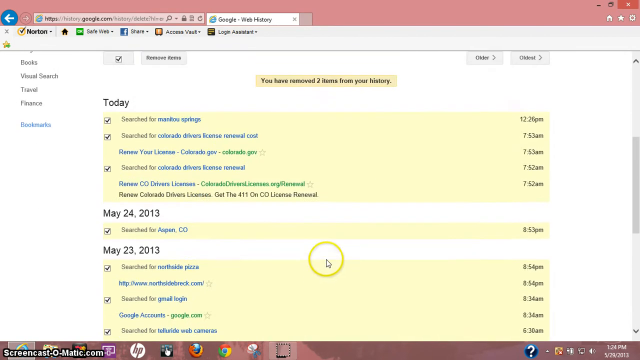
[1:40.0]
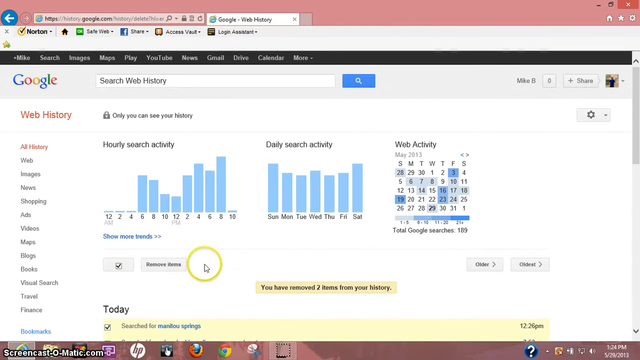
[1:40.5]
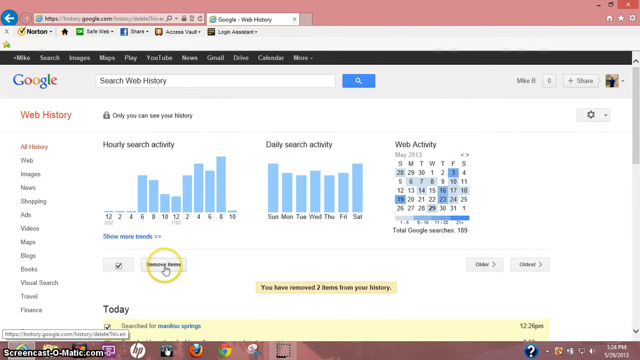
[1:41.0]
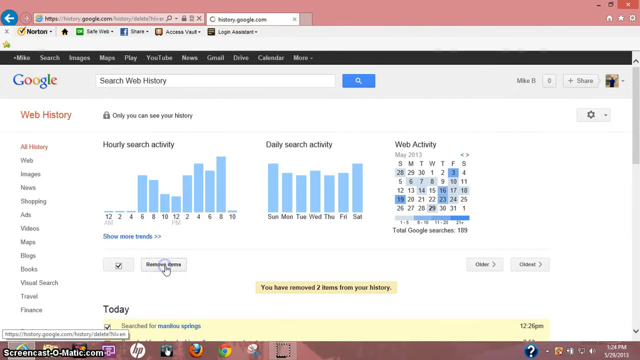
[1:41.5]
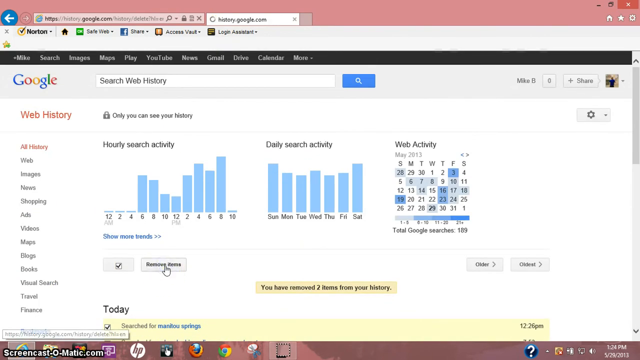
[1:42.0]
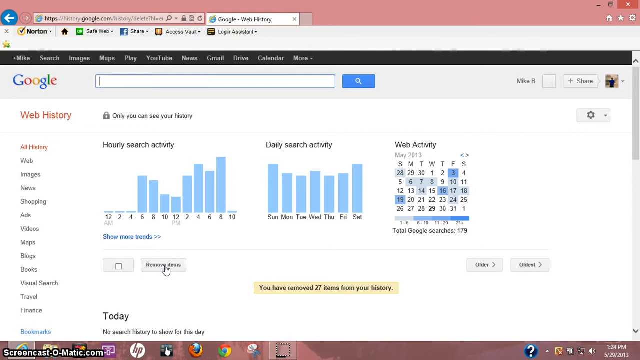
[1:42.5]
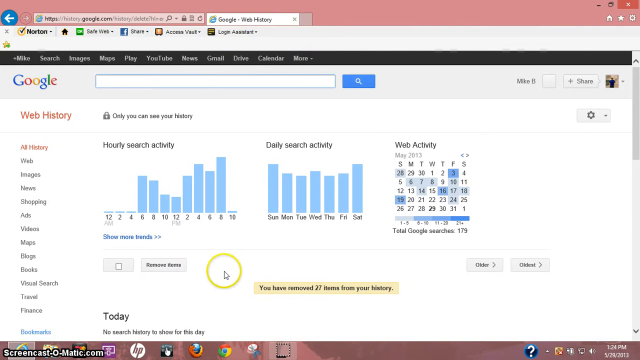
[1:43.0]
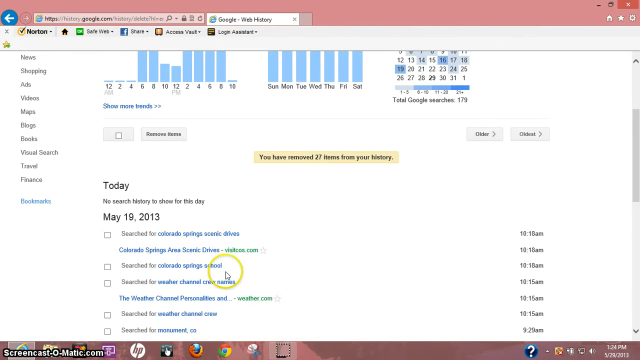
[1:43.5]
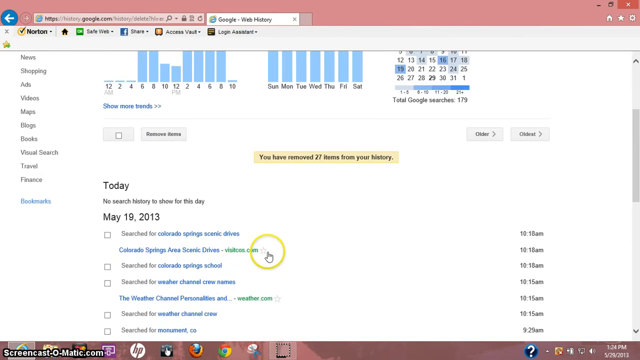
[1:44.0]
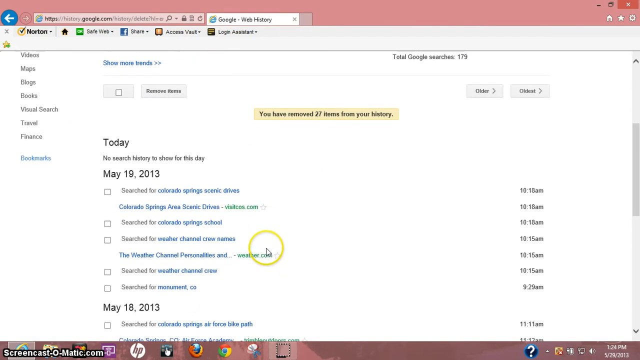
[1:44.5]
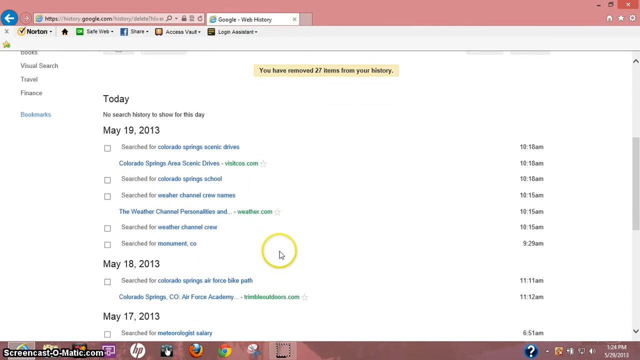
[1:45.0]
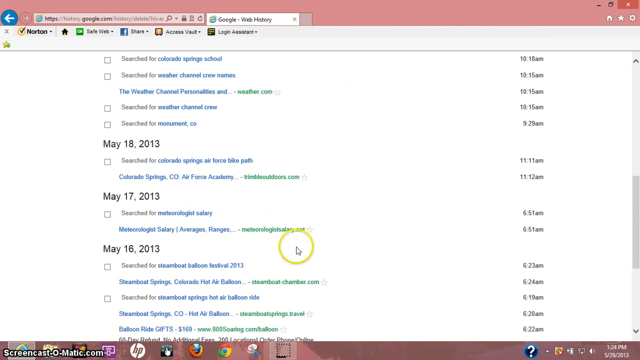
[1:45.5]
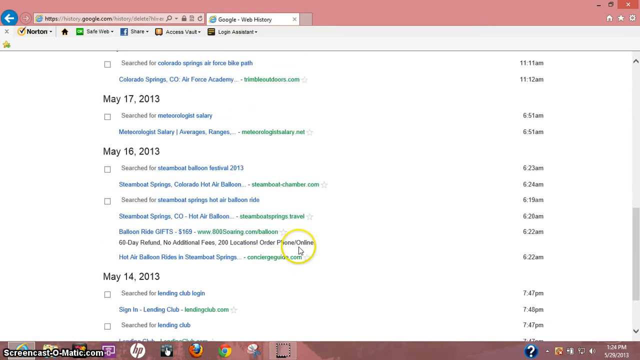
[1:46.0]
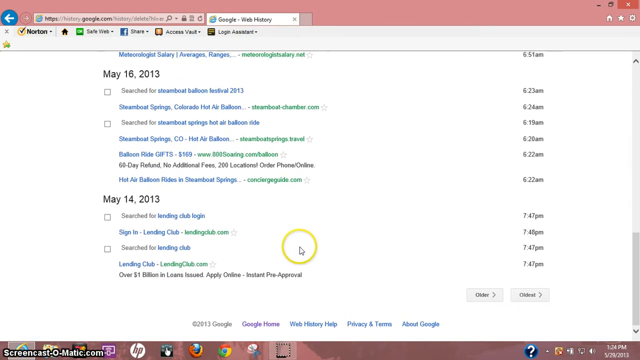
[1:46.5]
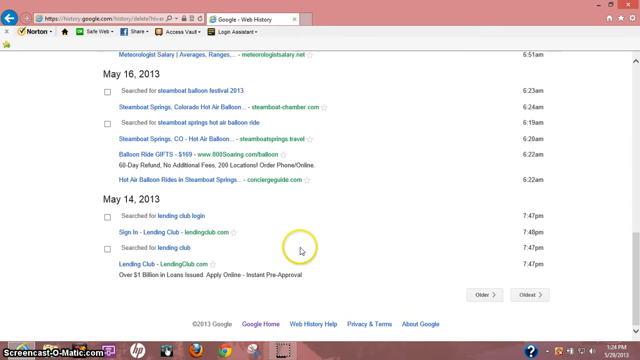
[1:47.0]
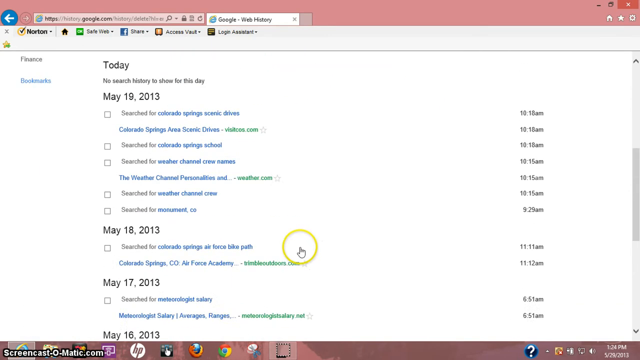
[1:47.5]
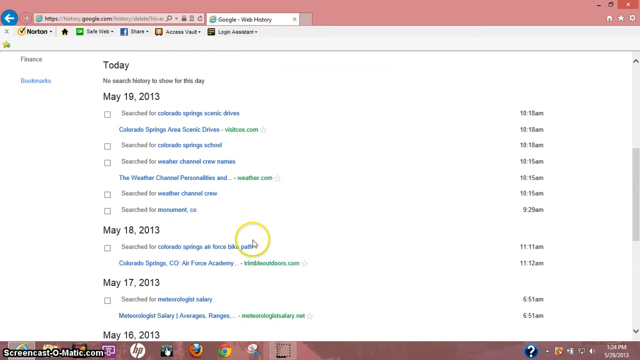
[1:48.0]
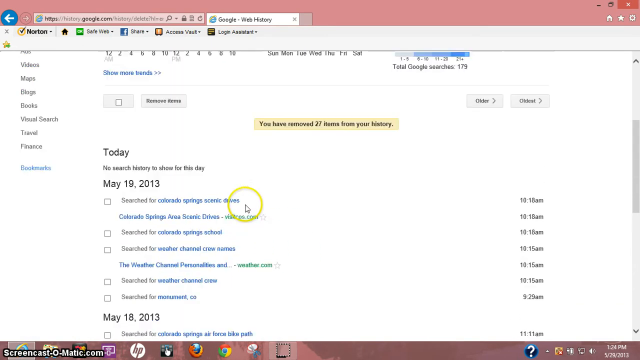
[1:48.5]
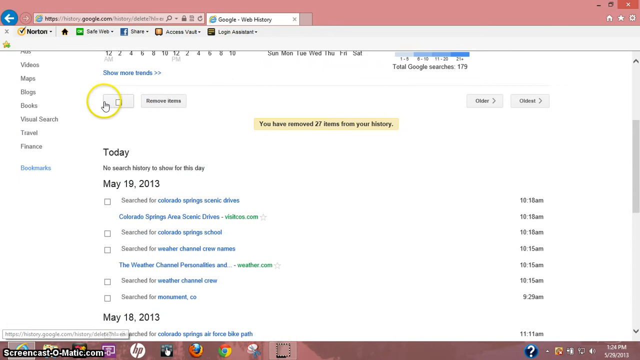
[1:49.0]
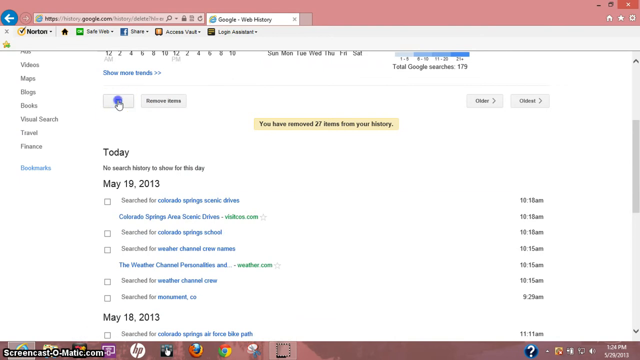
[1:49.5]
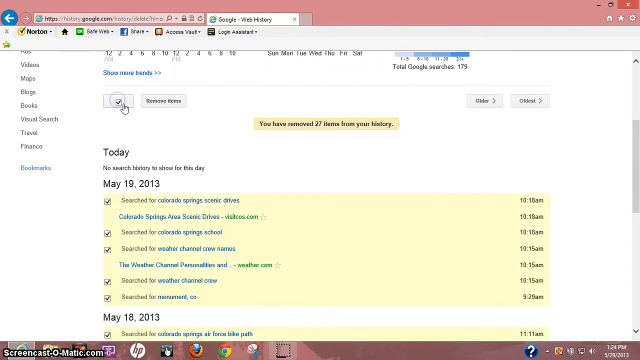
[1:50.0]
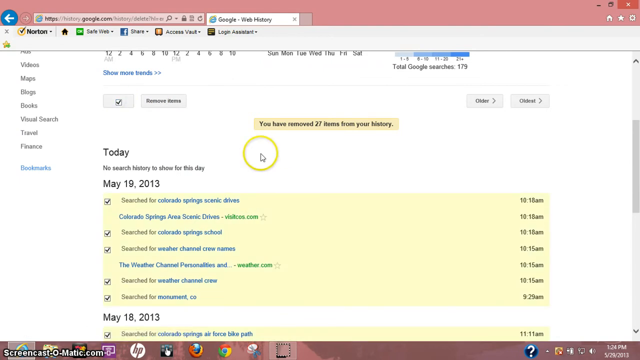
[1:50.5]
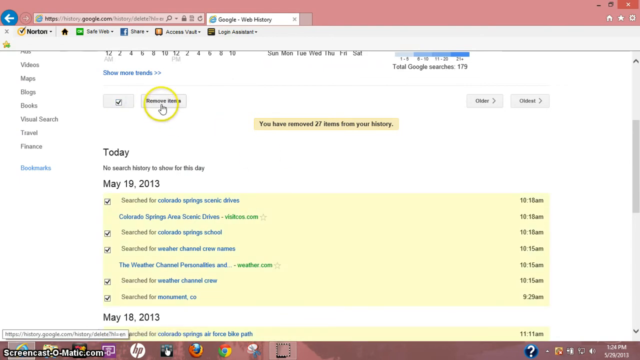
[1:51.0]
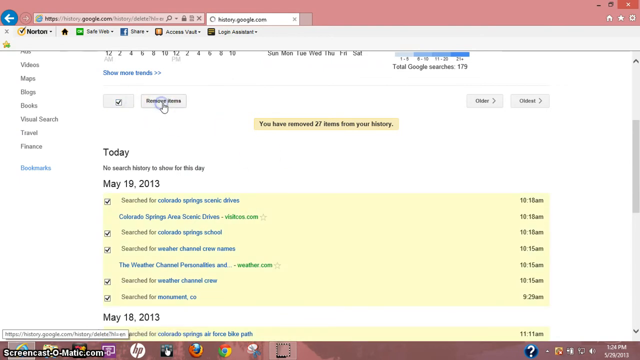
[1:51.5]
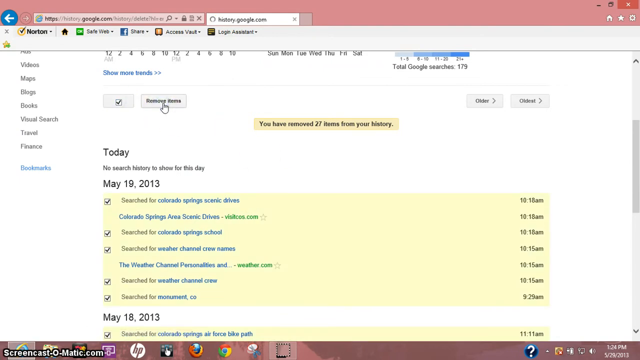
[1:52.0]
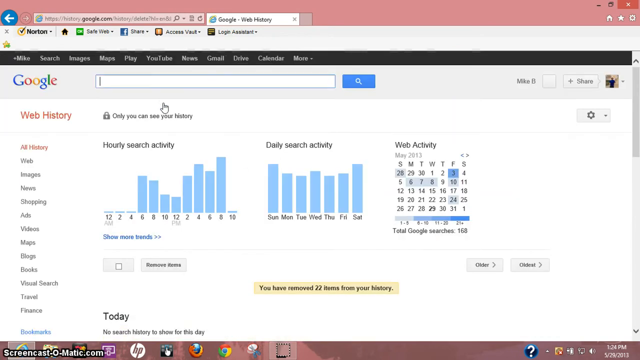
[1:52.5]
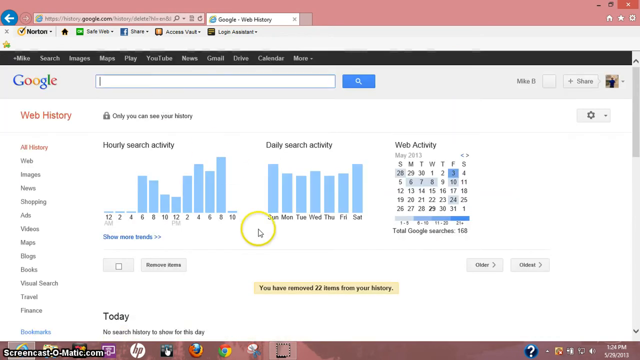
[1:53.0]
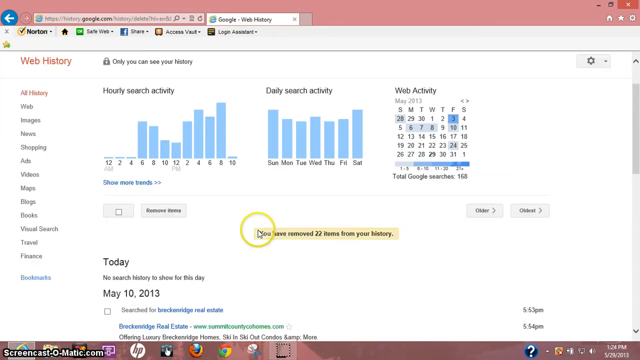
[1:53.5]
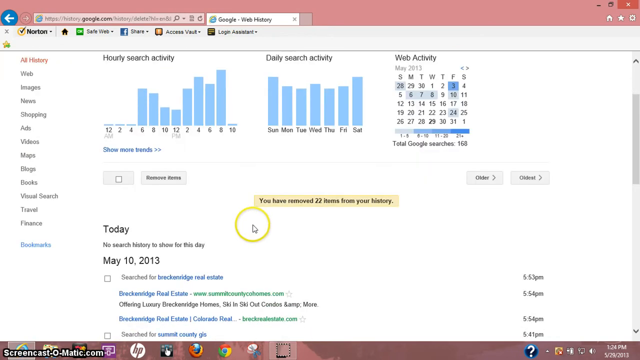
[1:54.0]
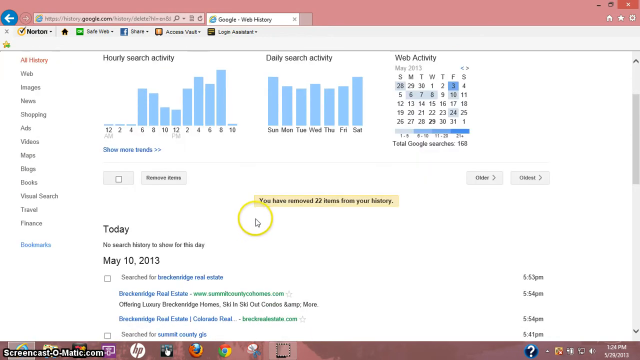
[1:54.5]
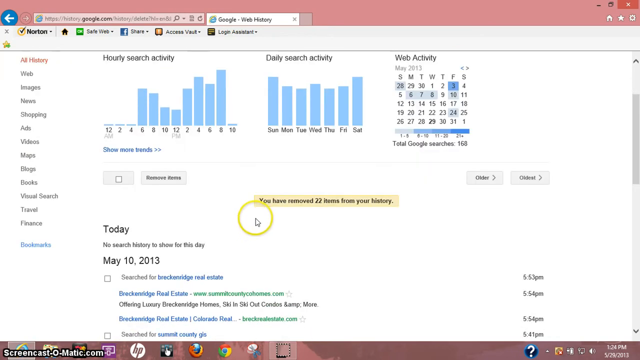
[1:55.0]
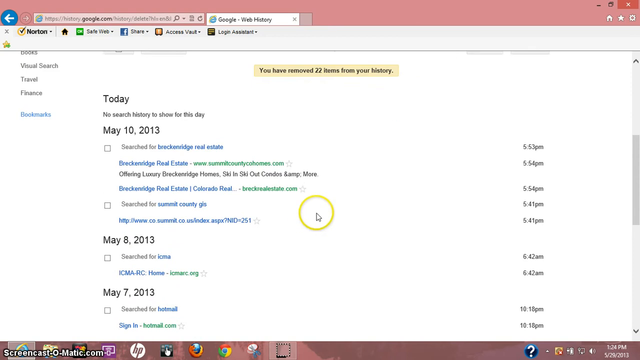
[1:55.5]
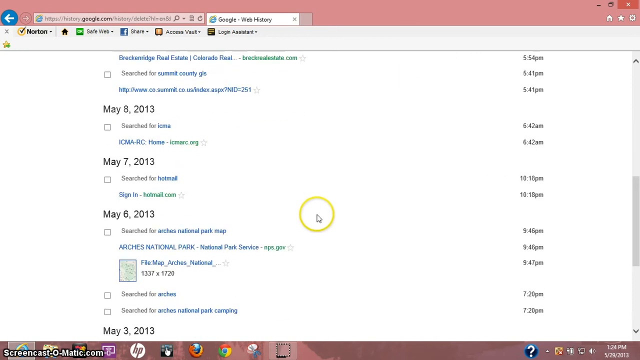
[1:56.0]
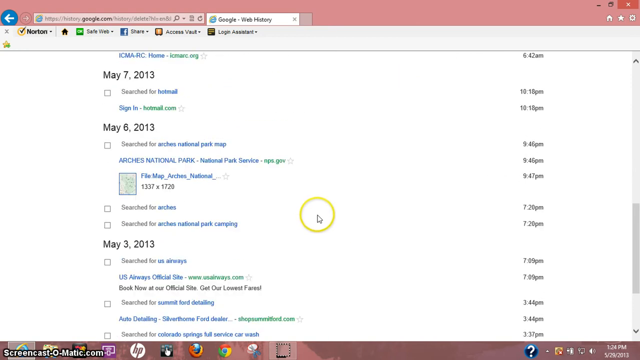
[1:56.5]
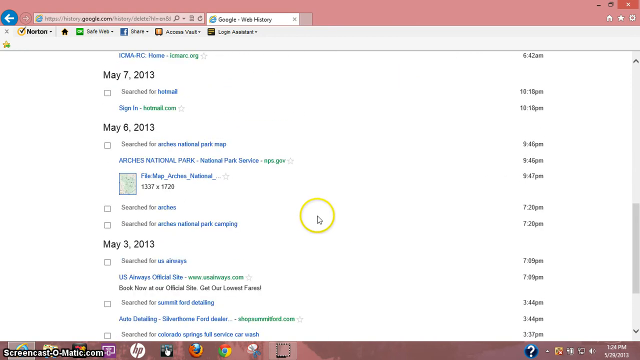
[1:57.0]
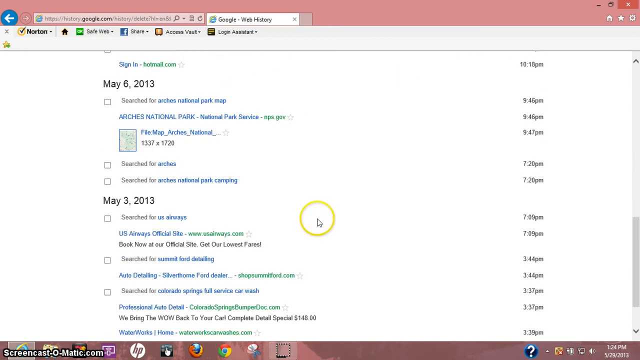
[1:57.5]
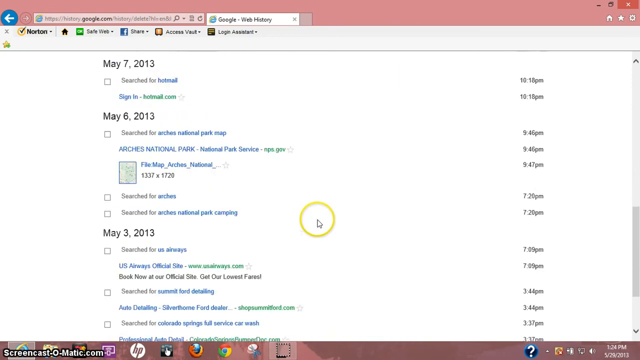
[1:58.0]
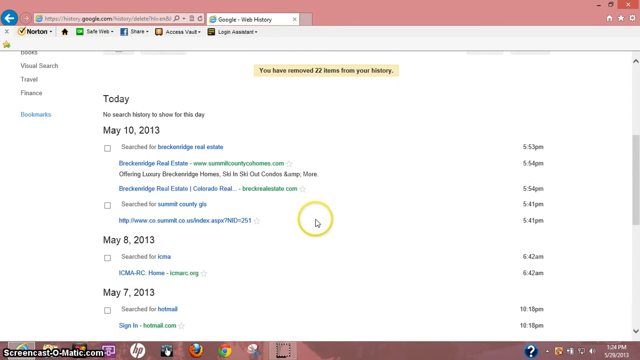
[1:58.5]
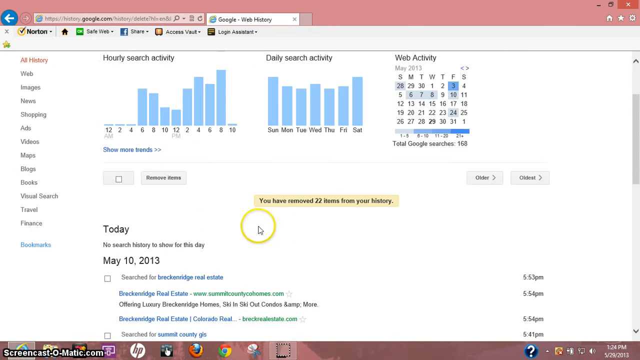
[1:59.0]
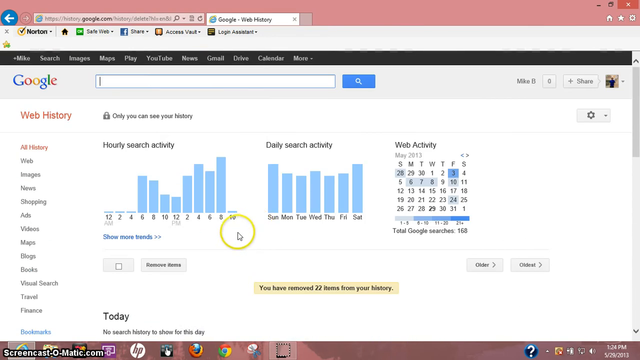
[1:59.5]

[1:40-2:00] A Google history page shows someone's history on Google.com. At the very top, highlighted, is the message "you have removed two items from your history". Below are categories labeled "today", "May 24th, 2013" and "May 23rd, 2013". A mouse cursor with a yellow circle is in the center of the screen; it moves up to a box that says "remove items" and clicks it, and many check marks in the boxes across the categories become unchecked. The cursor scrolls down, further down, and back up, then clicks a check box next to "remove items", and all the check boxes are checked once again. It clicks "remove items", and the screen changes to say "you have removed 22 items from your history". The cursor scrolls down through different dates and back up to the top.